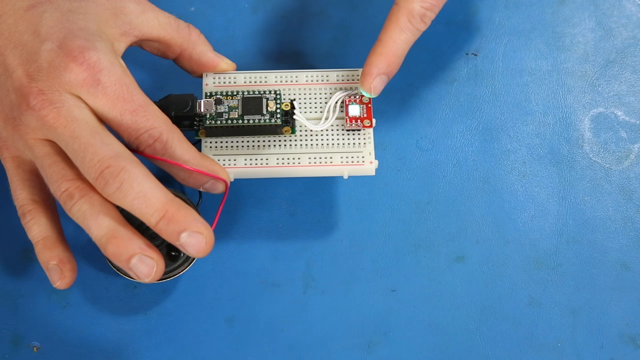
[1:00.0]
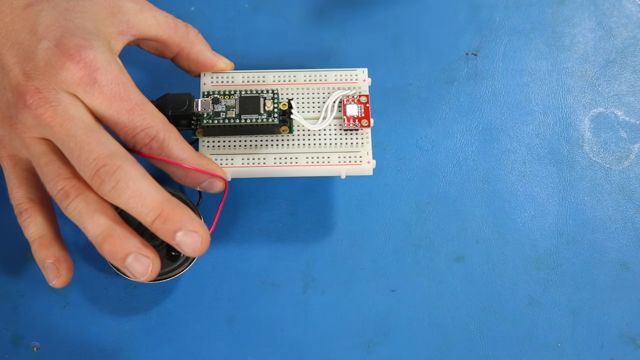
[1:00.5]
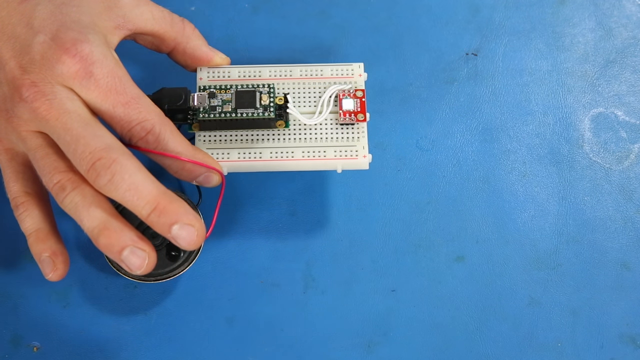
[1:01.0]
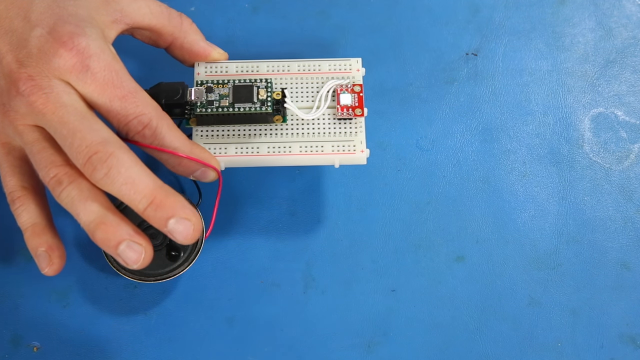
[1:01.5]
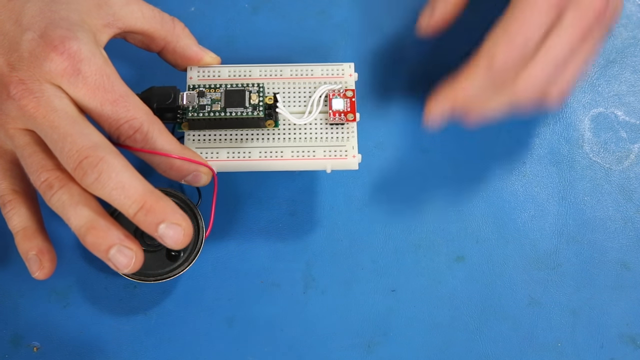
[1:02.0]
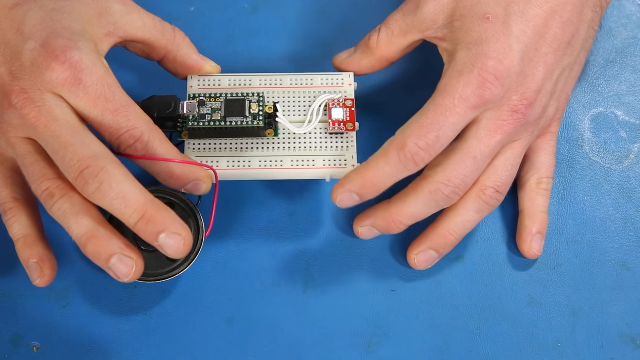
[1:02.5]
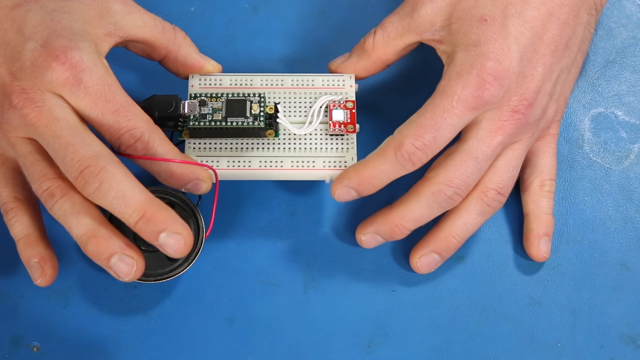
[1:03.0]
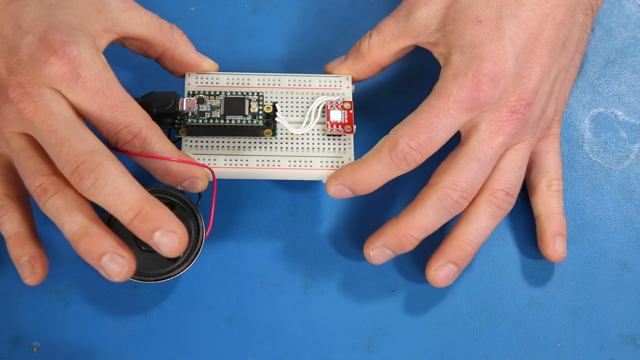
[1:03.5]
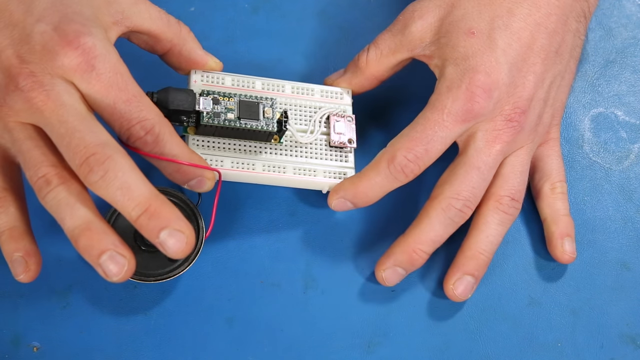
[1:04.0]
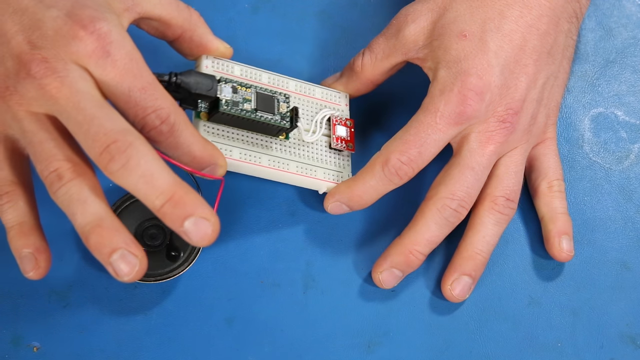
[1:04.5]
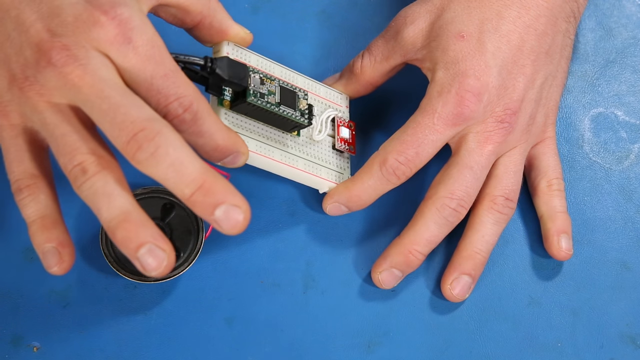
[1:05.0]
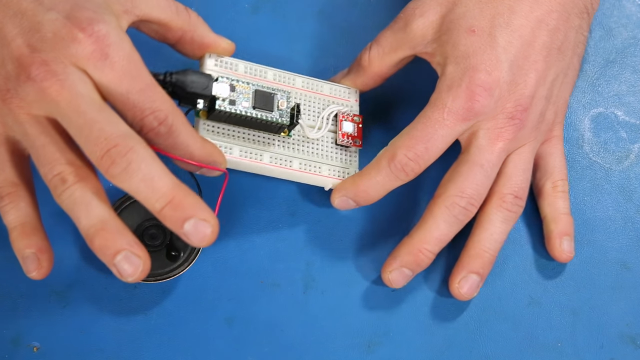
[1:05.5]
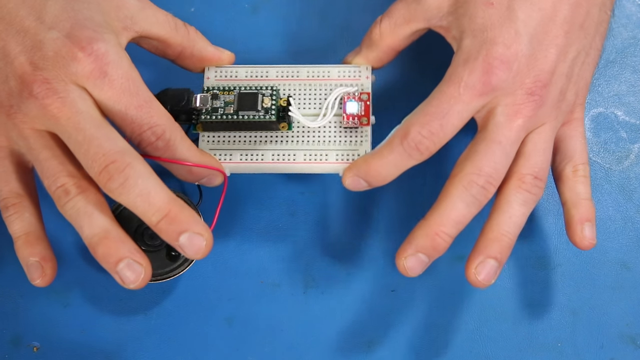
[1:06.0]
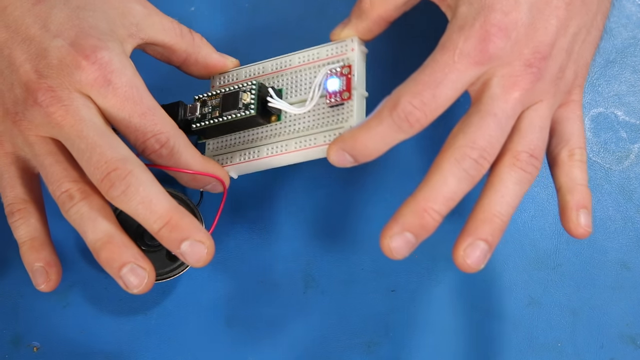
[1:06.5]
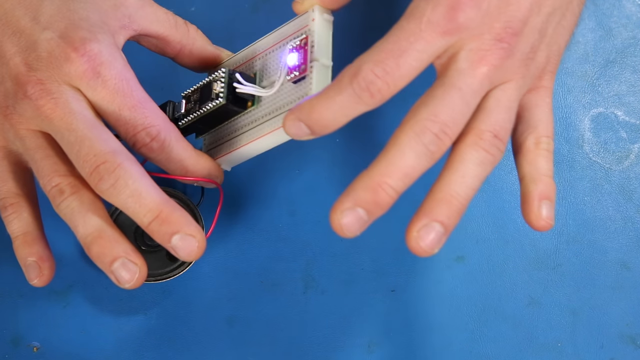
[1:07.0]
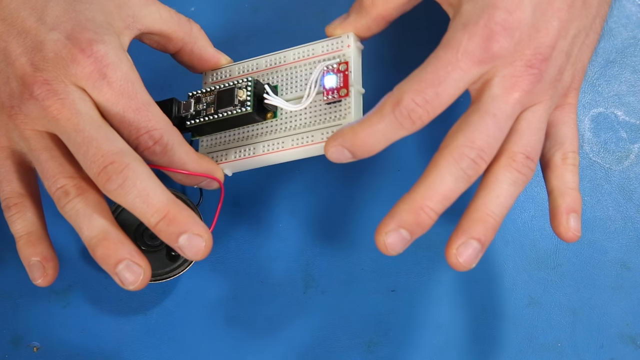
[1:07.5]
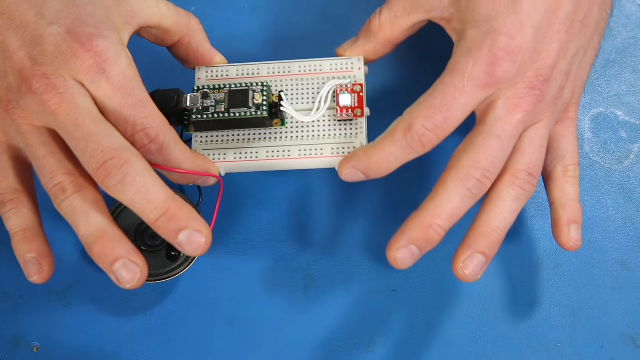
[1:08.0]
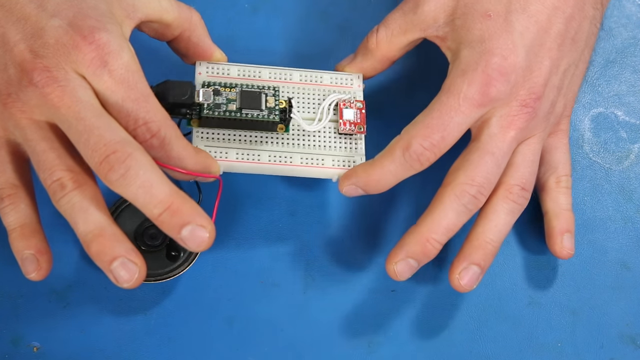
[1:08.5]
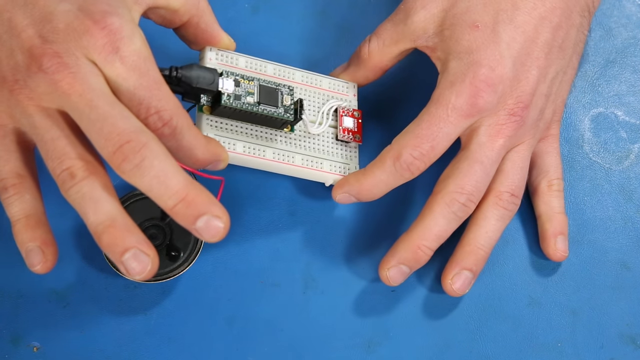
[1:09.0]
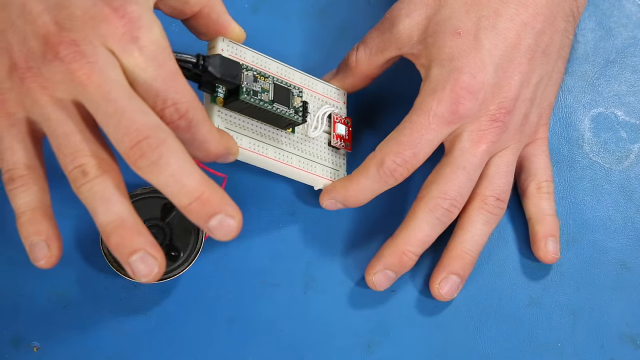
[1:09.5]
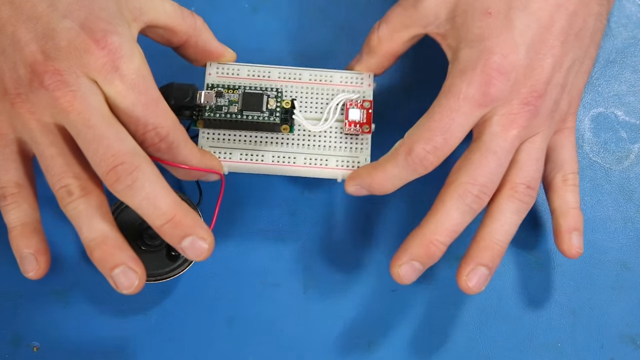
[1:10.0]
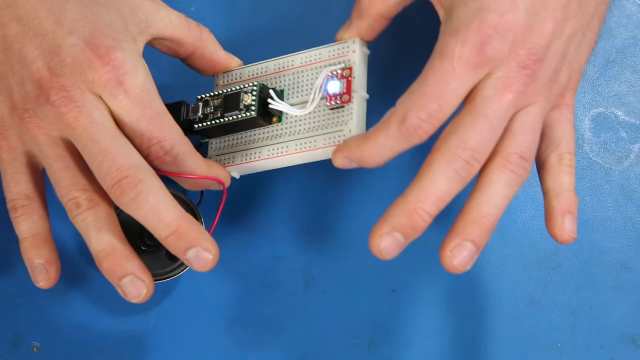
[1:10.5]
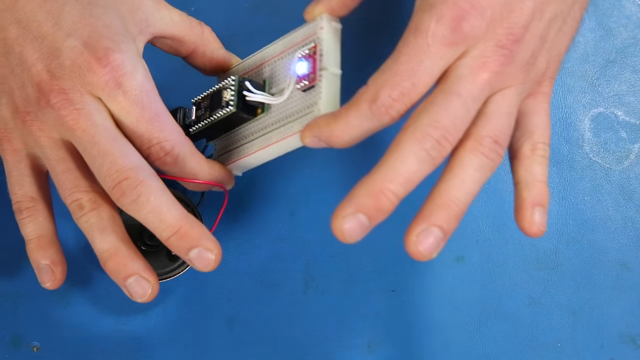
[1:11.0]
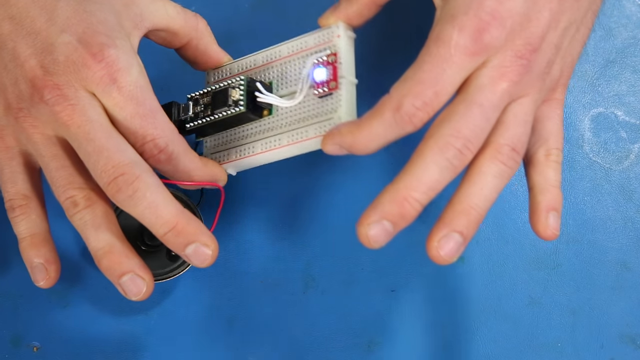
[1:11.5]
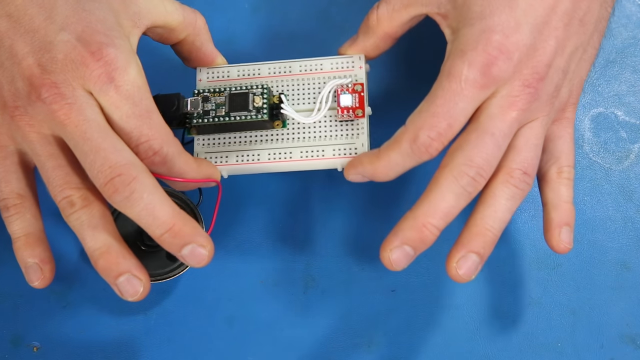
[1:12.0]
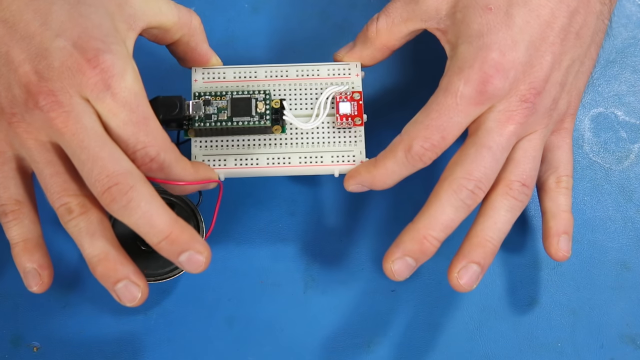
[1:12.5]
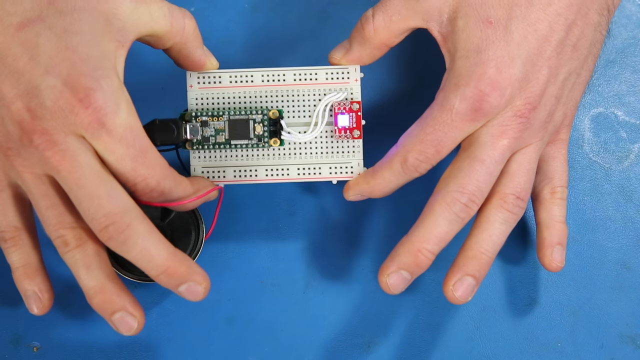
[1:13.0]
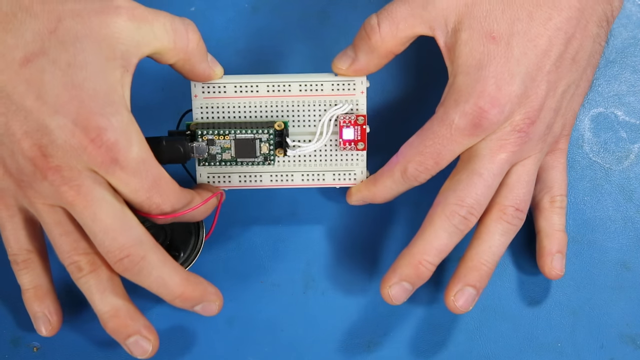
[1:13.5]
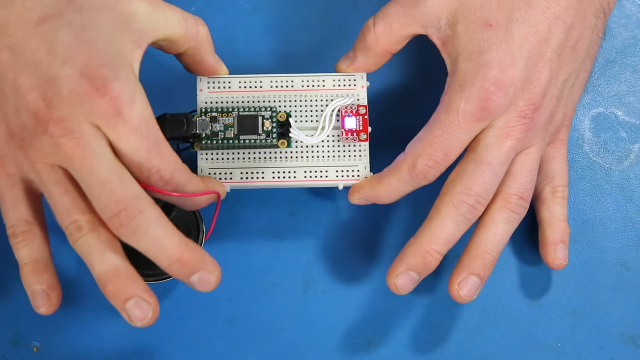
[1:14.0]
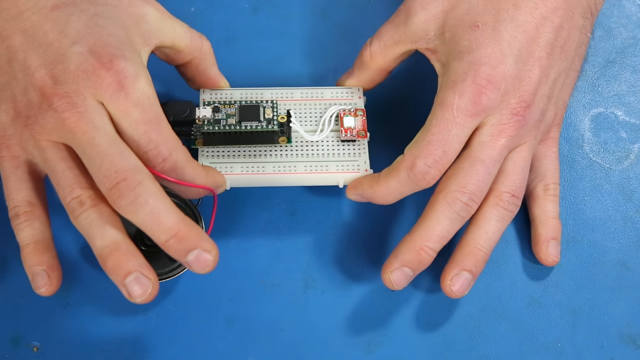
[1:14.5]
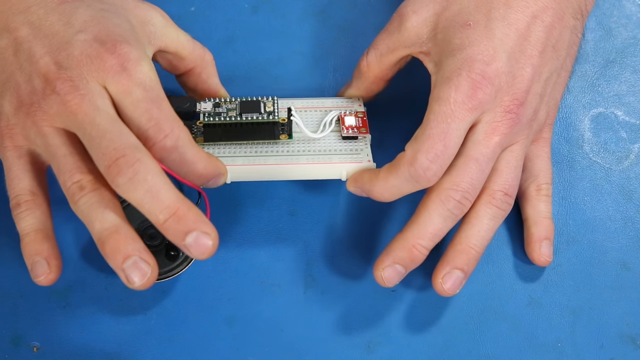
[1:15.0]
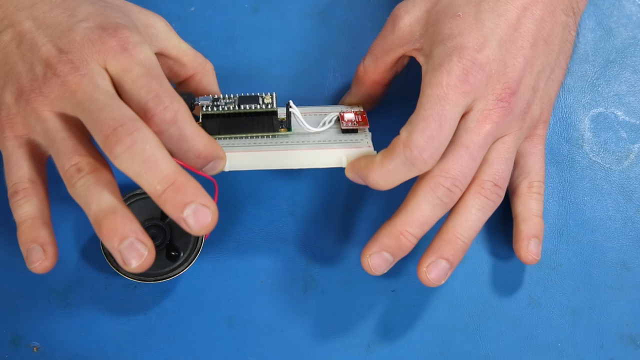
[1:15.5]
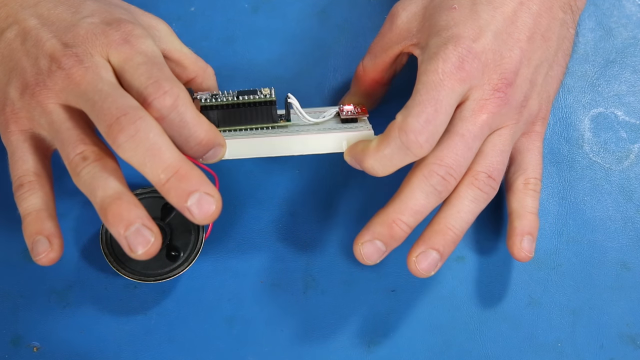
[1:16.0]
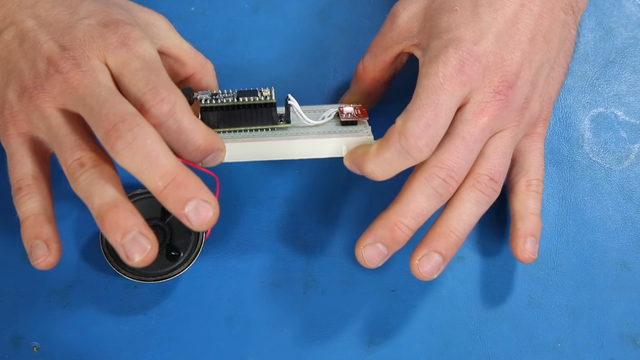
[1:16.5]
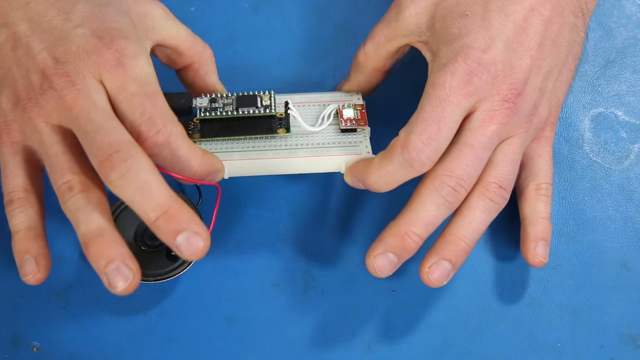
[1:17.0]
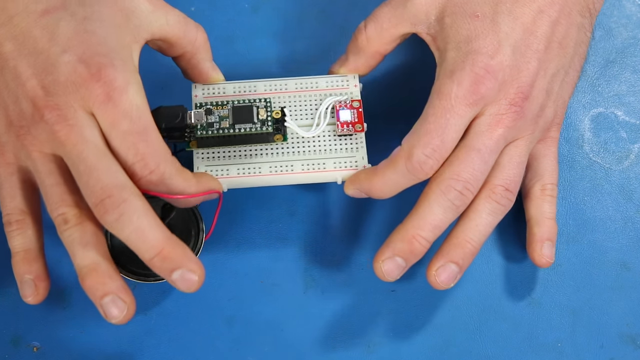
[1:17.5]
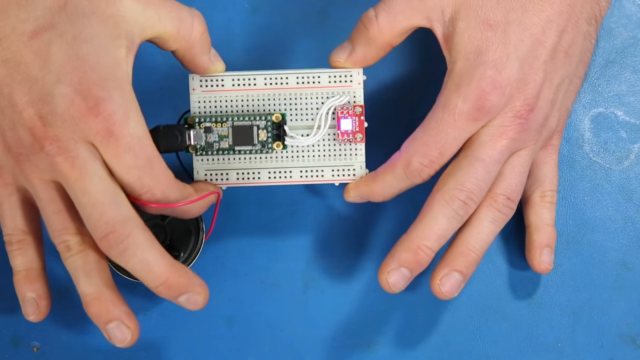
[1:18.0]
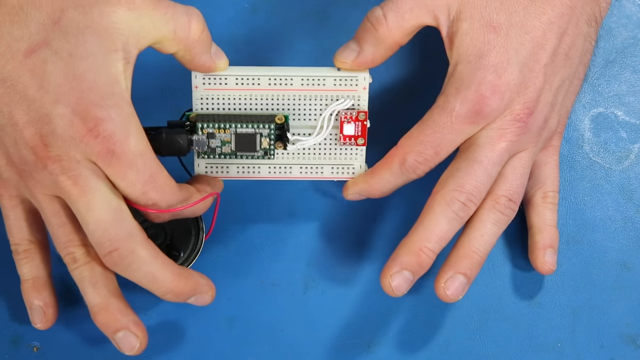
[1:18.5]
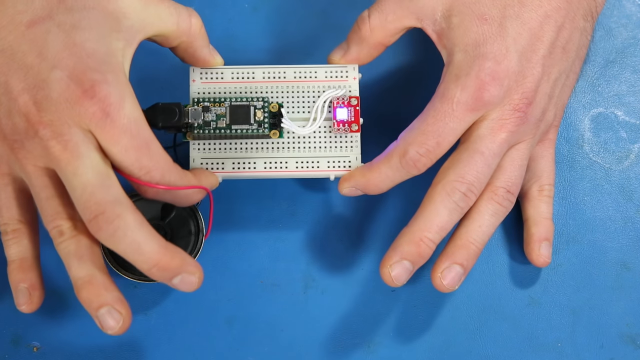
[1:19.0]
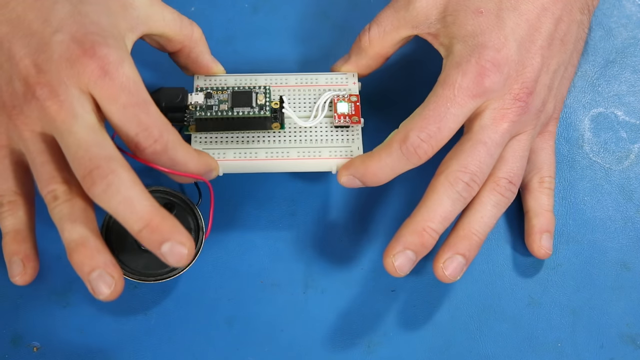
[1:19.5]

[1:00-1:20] Two manly hands hold a device that appears to be made of some sort of white plastic, with many holes on which components can be mounted. Two wires come off the device, one red and one black, and three white wires connect two different microchips: the one on the left is green with silver, gold and black, and the one on the right is red with silver, gold and white. The right hand goes off screen, returns and grips the device, which is tilted to show off its various aspects: from left to right and right to left, repeated, and then from up to down and down to up, also repeated.